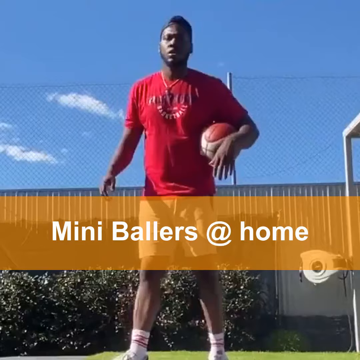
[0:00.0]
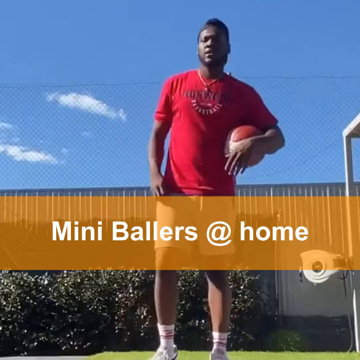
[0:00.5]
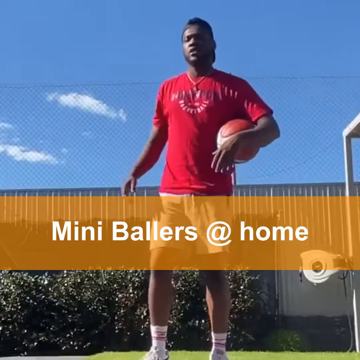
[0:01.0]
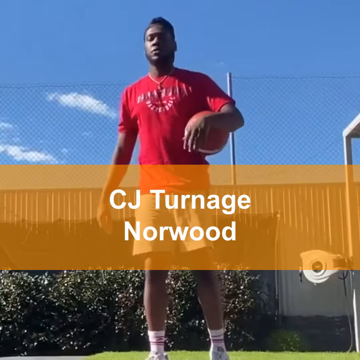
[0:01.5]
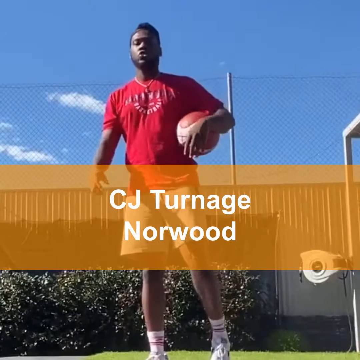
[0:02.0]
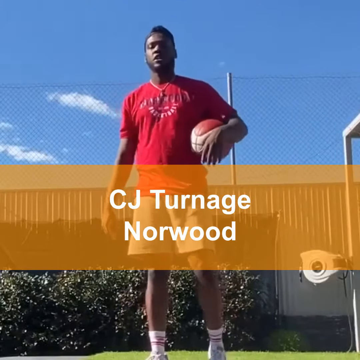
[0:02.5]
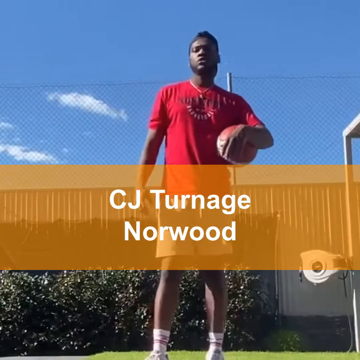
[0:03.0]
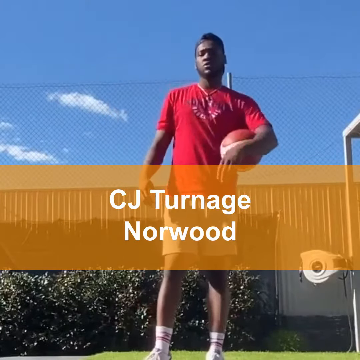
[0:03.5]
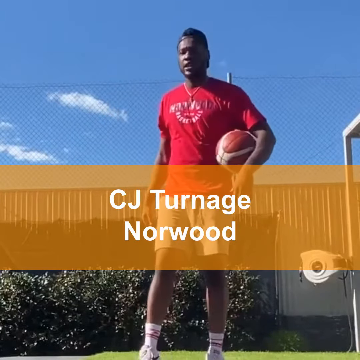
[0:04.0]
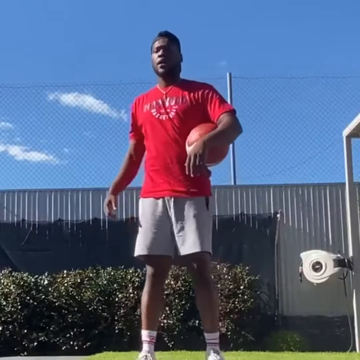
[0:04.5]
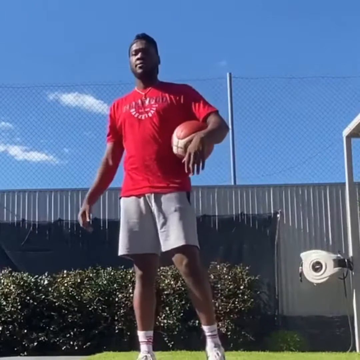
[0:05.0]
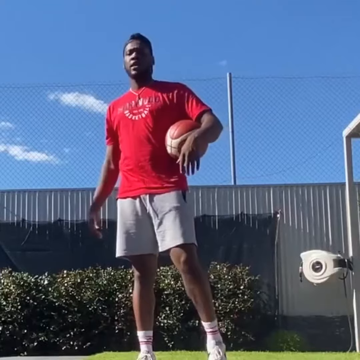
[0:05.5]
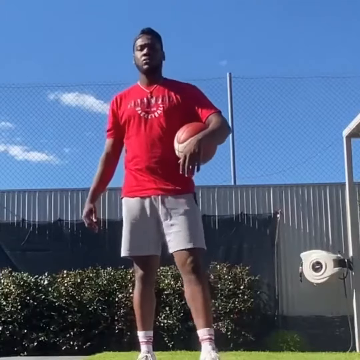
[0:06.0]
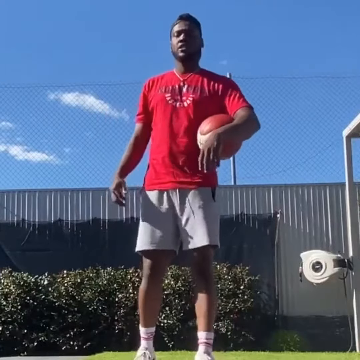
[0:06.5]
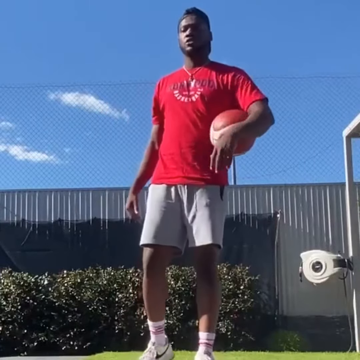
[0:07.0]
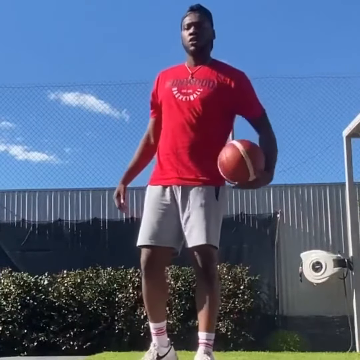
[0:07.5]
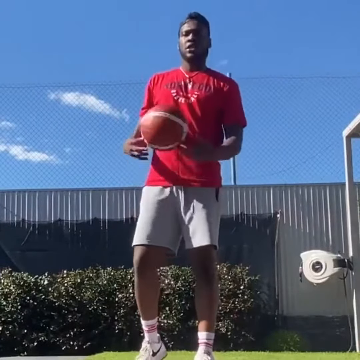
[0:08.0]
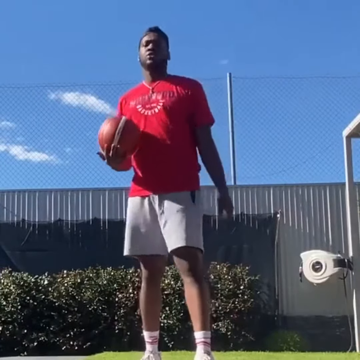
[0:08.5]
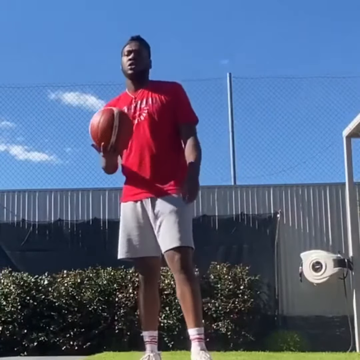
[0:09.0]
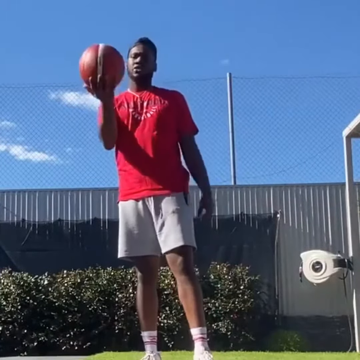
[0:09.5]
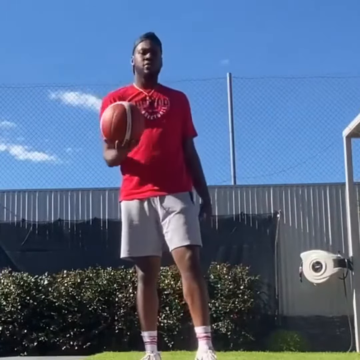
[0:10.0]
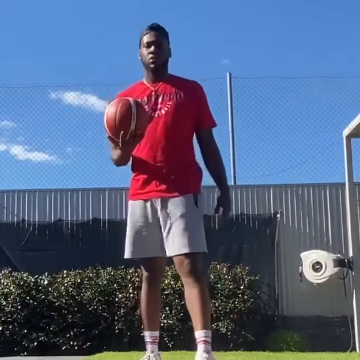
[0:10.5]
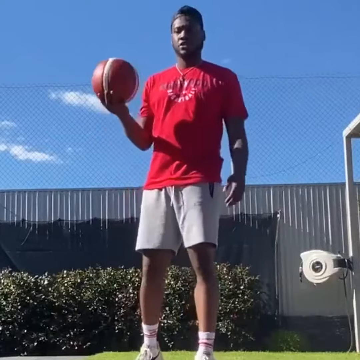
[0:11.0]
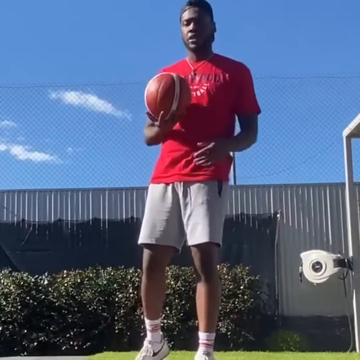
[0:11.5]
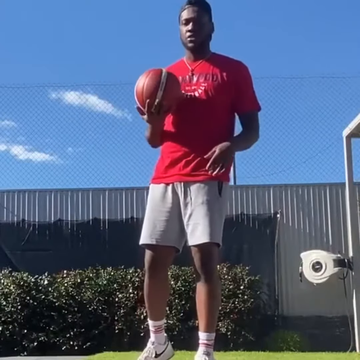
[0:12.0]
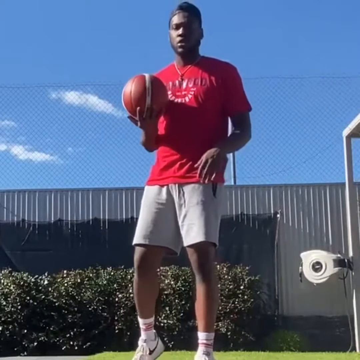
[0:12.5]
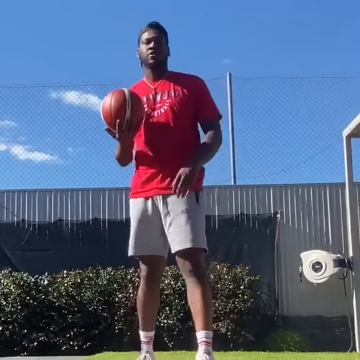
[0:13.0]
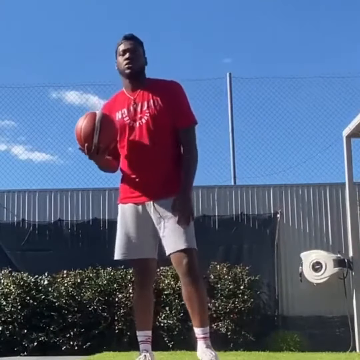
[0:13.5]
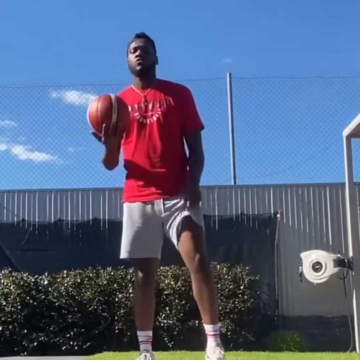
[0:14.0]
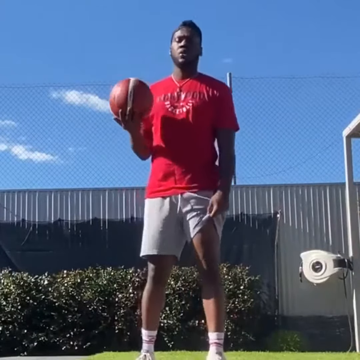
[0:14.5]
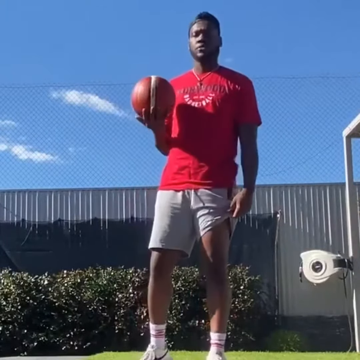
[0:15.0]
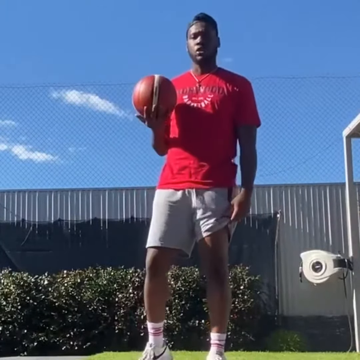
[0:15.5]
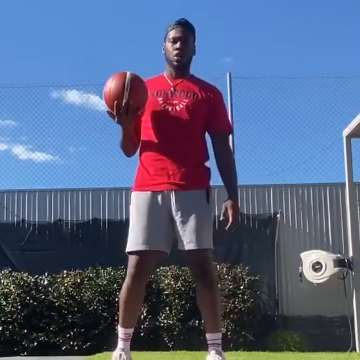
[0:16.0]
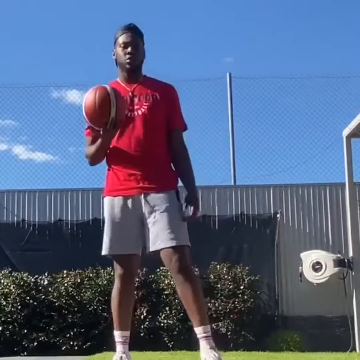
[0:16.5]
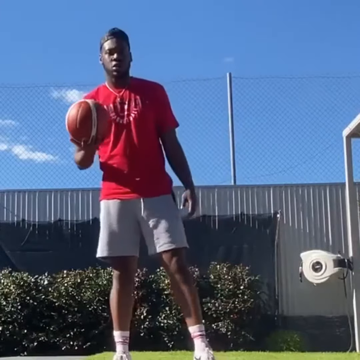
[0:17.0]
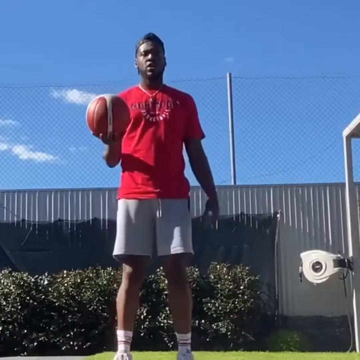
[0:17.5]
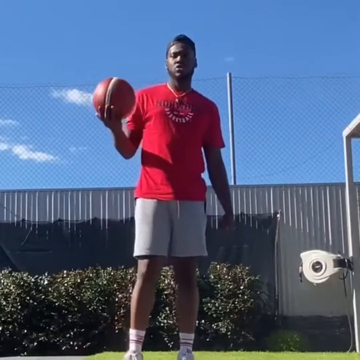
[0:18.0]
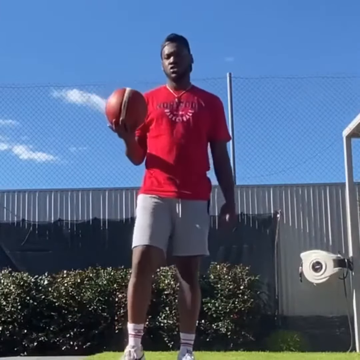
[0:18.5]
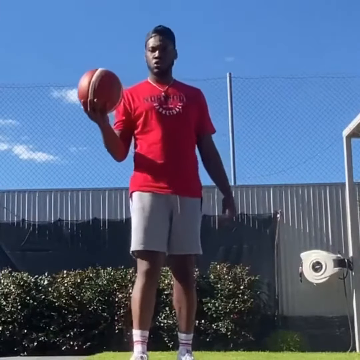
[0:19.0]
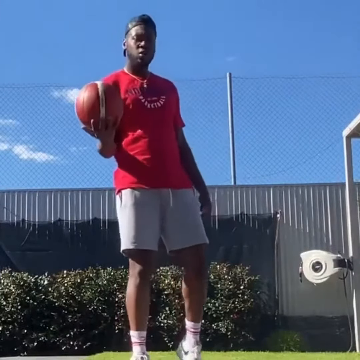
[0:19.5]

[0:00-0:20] A man in a red t-shirt and khaki shorts holds an orange and white basketball. A pop-up embedded in the video gives his name as "CJ Turner wood," and the video is called mini ballers at home. He stands in place and moves the basketball from underneath his left arm into his right hand, resting it on his upturned palm. He is talking, apparently explaining what the video will be about and probably introducing himself. There is no hoop in view; the background has a bush, a carport with an air hose attachment, and a big metal building. The sky is clear and blue with two little white clouds.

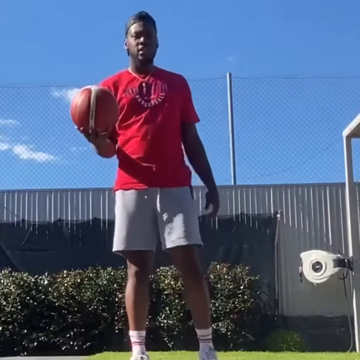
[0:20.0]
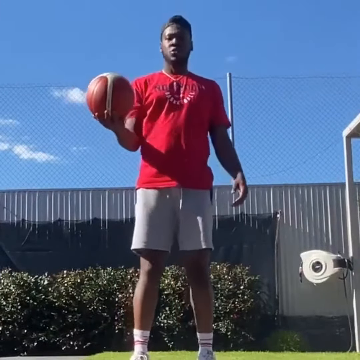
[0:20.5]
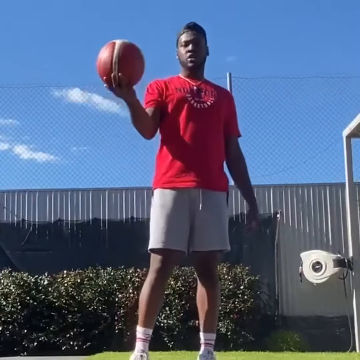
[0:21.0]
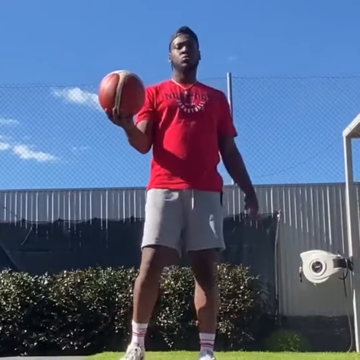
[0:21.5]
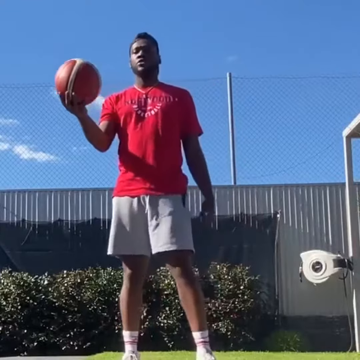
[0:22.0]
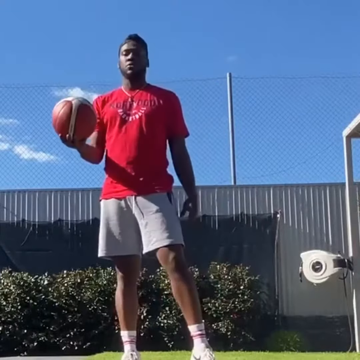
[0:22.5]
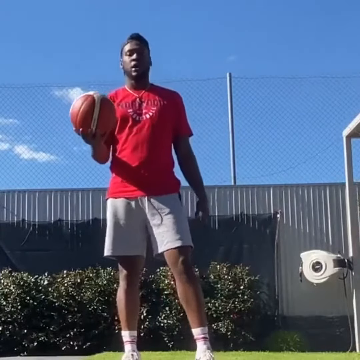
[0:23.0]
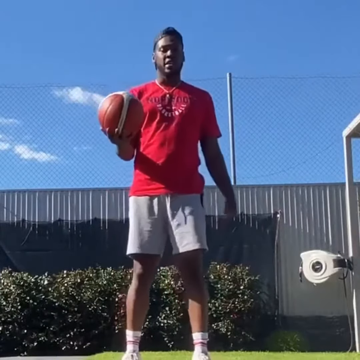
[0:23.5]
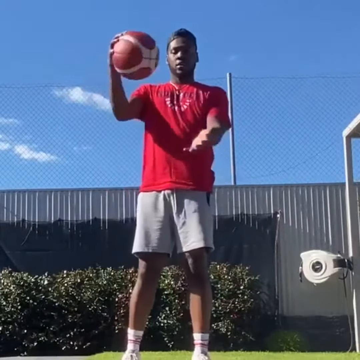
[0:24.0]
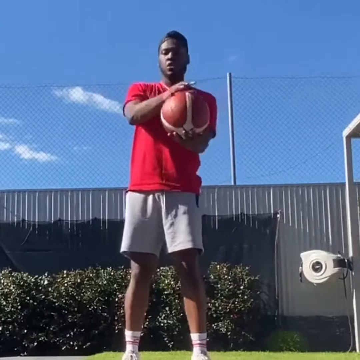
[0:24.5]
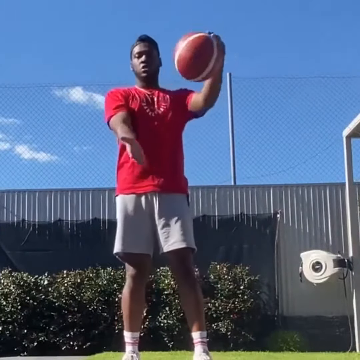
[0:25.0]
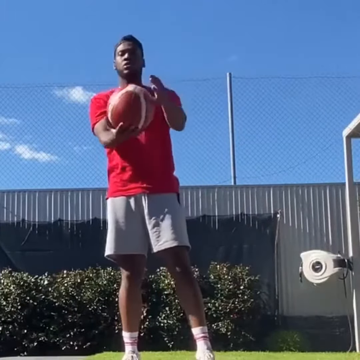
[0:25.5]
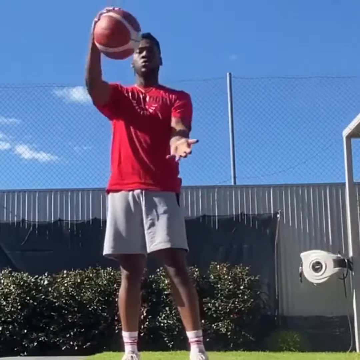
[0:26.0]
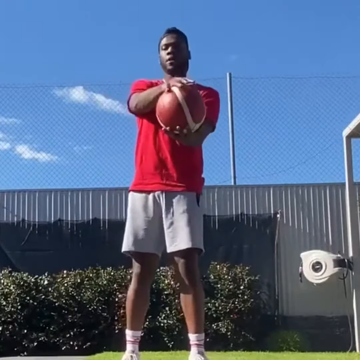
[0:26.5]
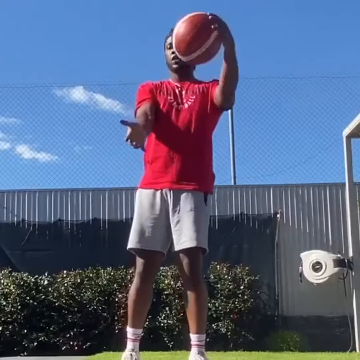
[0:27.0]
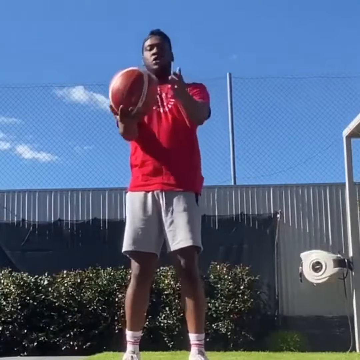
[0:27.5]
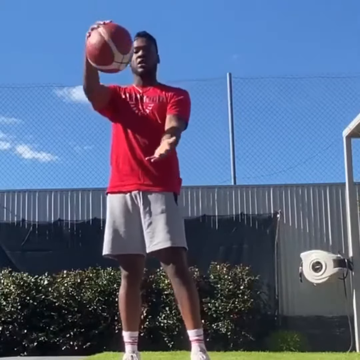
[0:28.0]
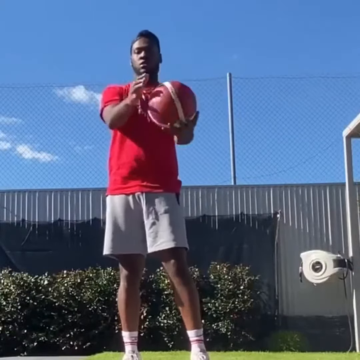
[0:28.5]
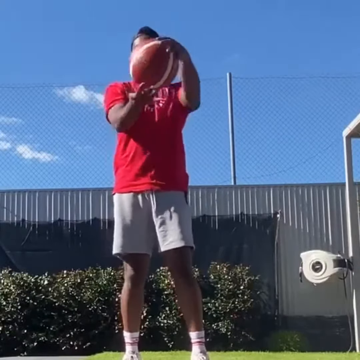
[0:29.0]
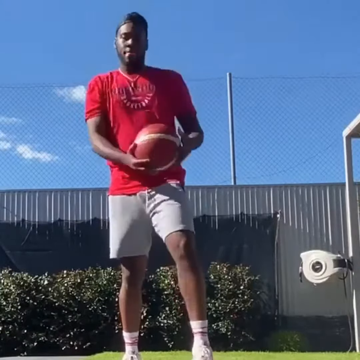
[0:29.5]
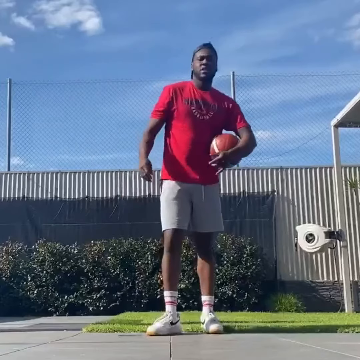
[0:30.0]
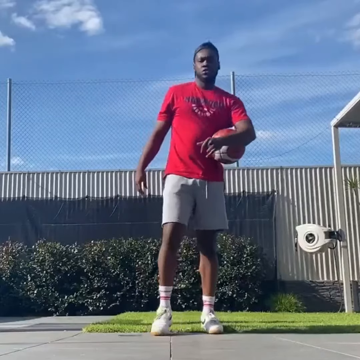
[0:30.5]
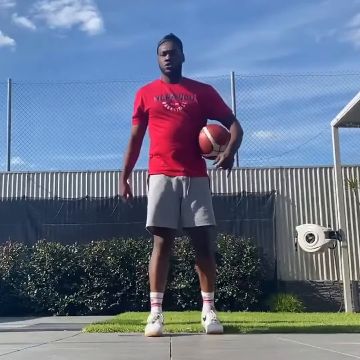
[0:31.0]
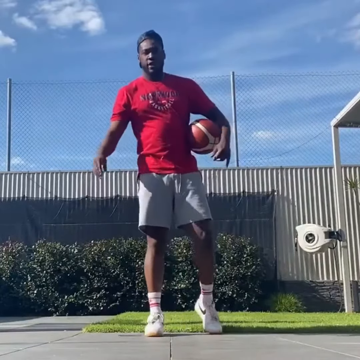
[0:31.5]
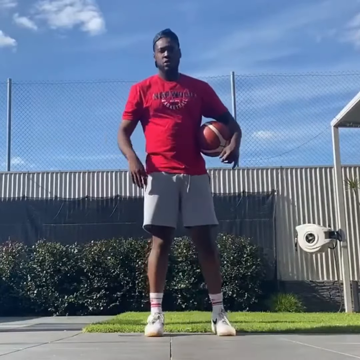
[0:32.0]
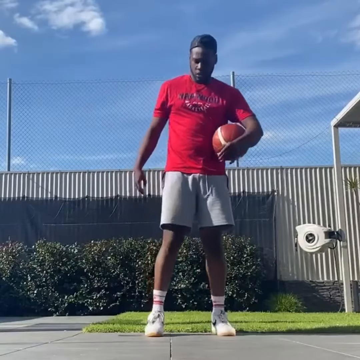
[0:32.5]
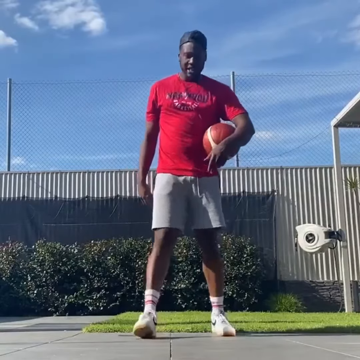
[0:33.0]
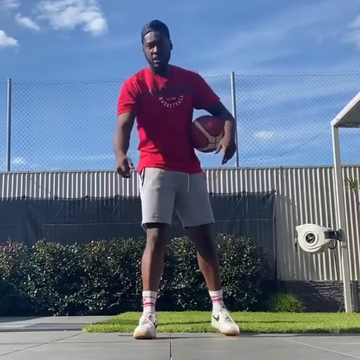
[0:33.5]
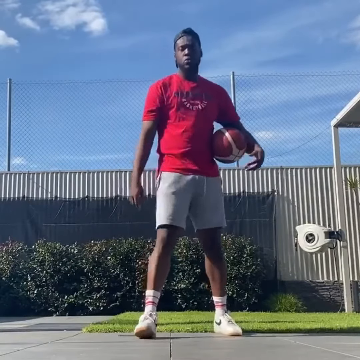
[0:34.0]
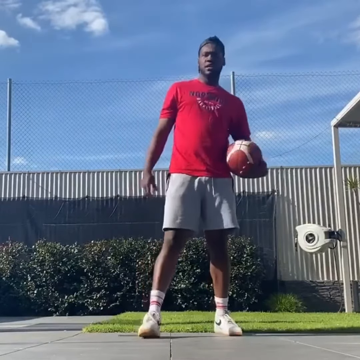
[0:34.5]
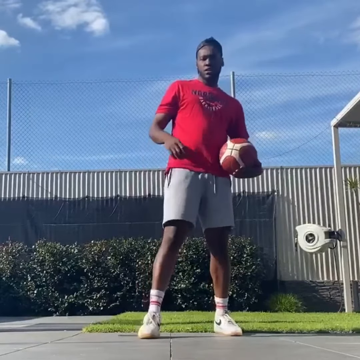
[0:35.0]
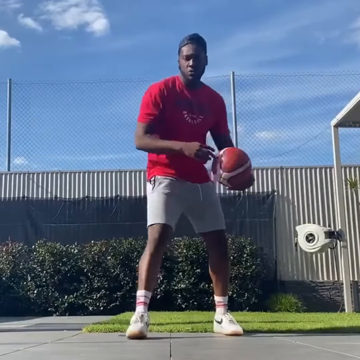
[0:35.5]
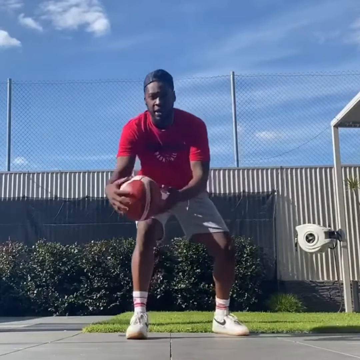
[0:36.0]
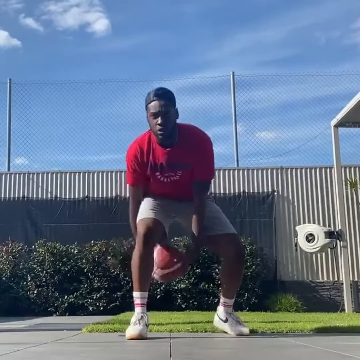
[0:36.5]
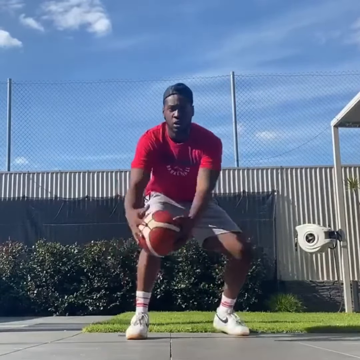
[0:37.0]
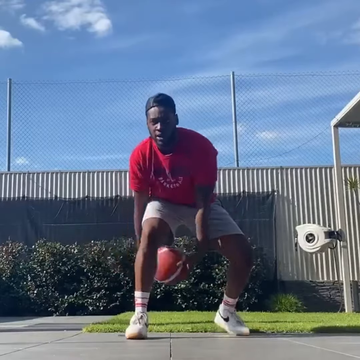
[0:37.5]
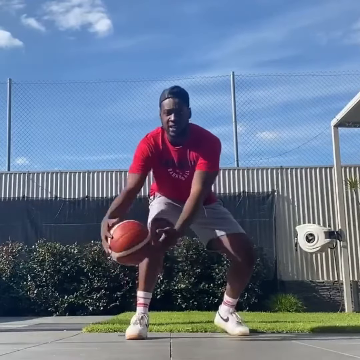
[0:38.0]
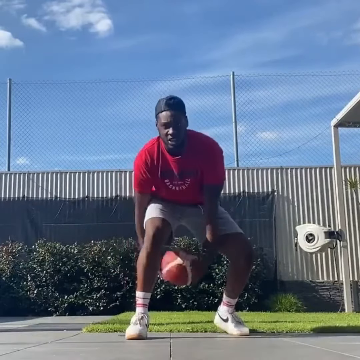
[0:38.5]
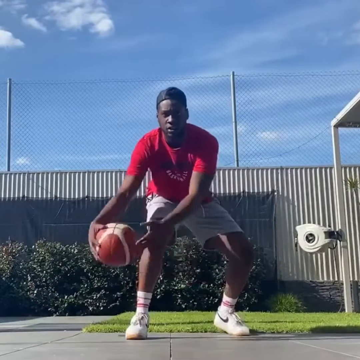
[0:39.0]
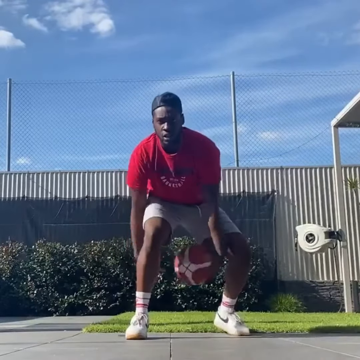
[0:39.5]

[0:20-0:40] The basketball instructor, Jay Bancroft, is still standing in the same position. Starting with the ball resting on his upturned right palm, he moves it to his left hand, passing it back and forth from right palm up to left palm up in what looks like a figure eight motion, apparently to build the muscle memory used for dribbling between the legs.